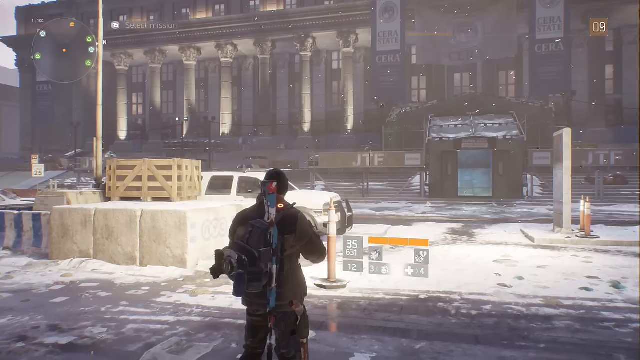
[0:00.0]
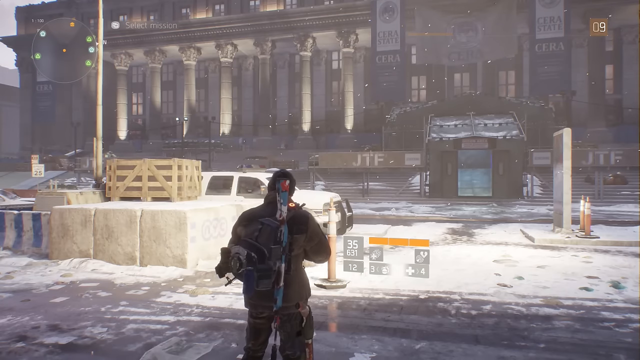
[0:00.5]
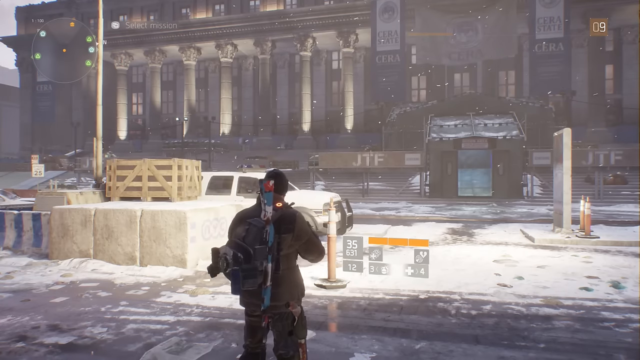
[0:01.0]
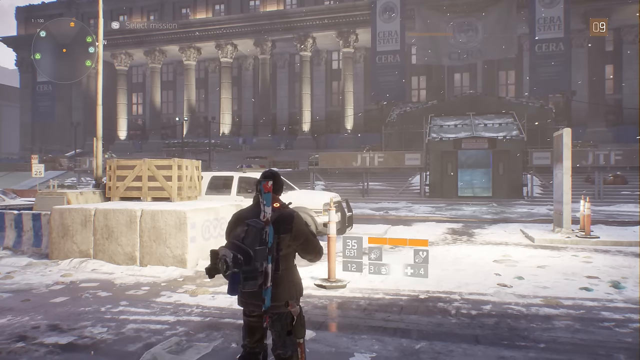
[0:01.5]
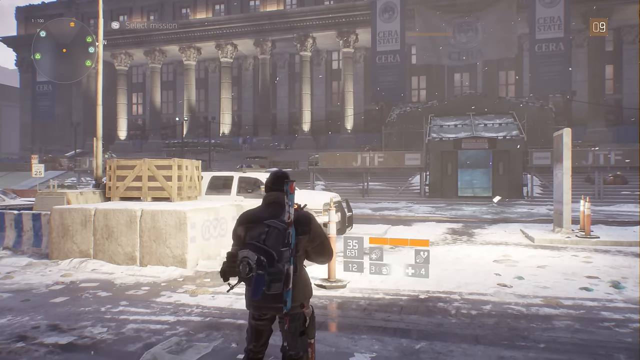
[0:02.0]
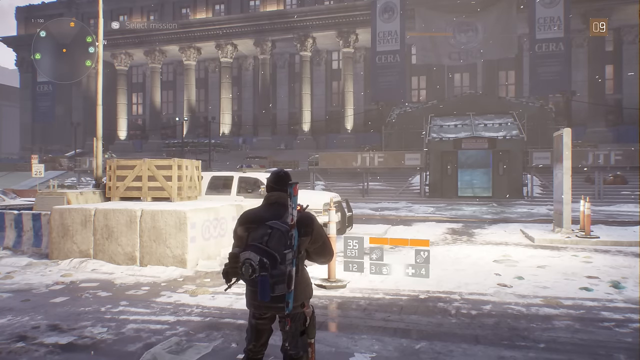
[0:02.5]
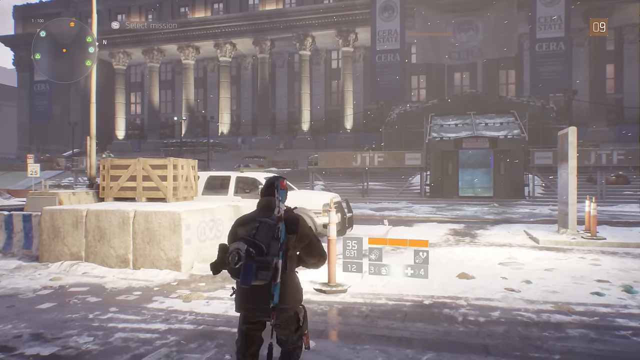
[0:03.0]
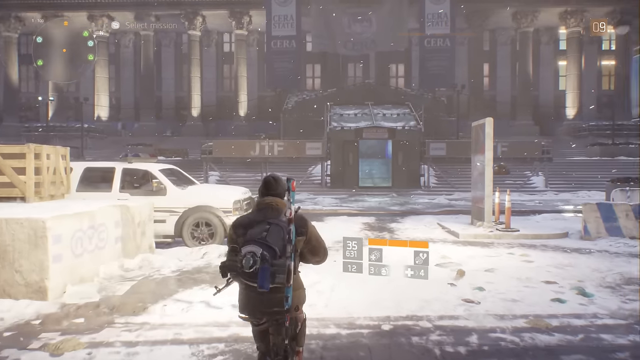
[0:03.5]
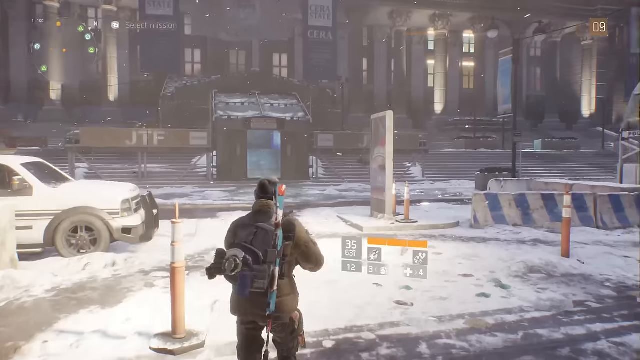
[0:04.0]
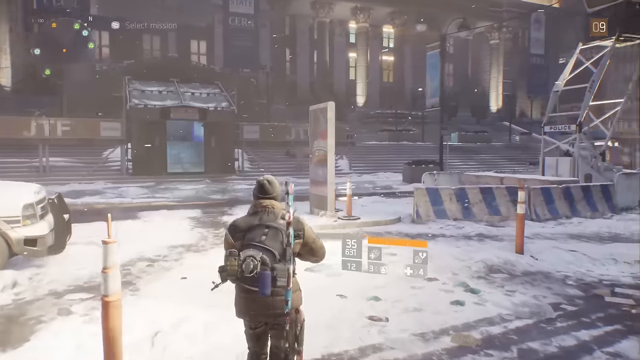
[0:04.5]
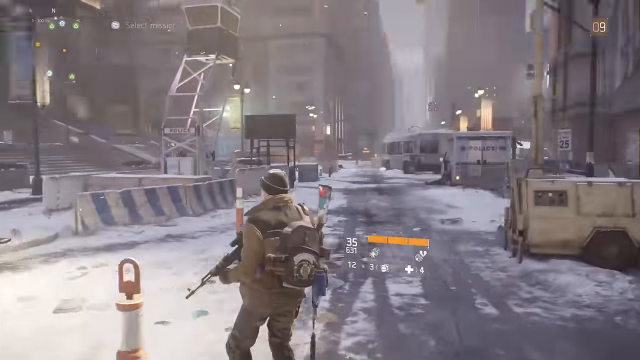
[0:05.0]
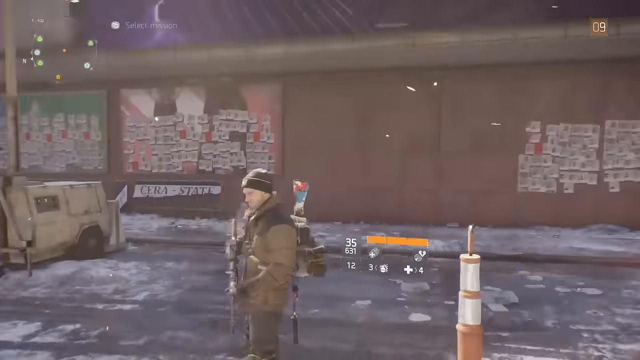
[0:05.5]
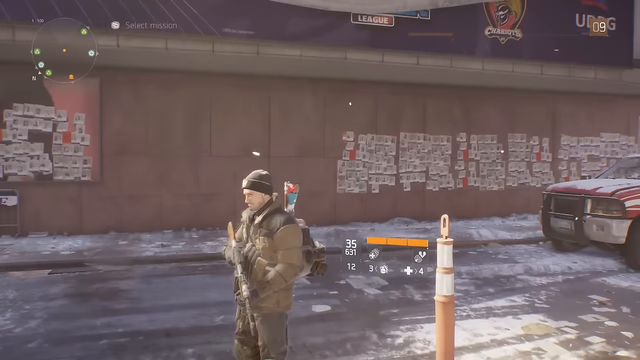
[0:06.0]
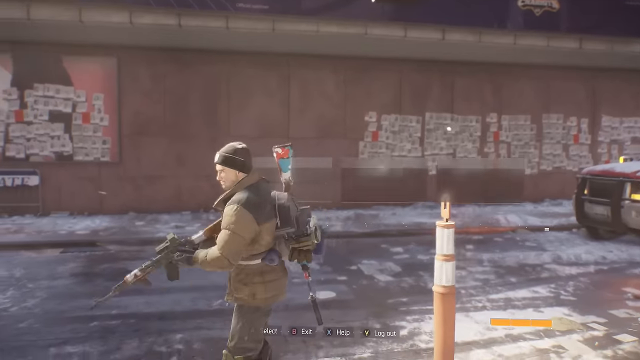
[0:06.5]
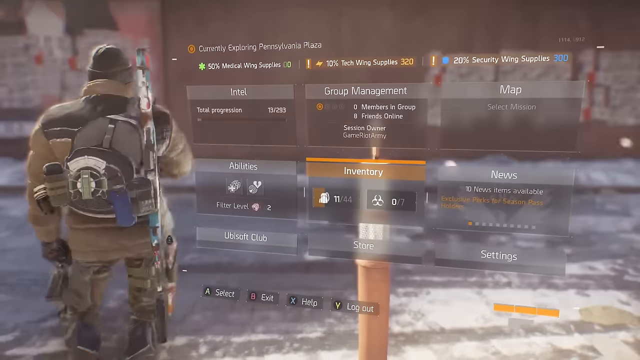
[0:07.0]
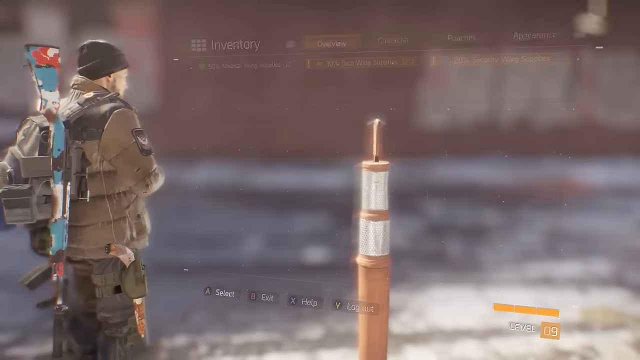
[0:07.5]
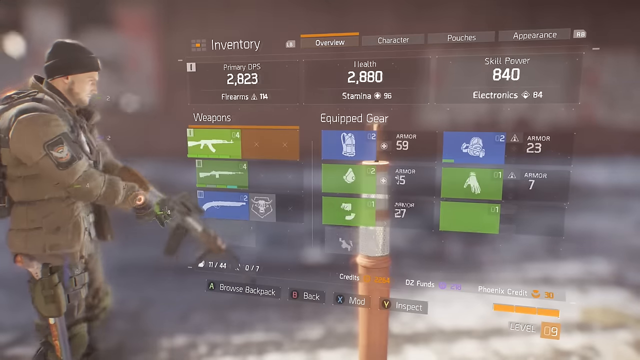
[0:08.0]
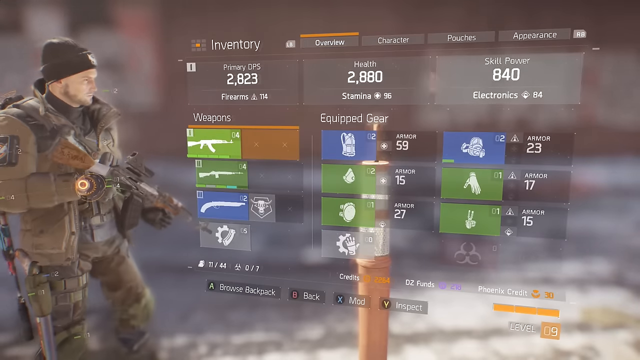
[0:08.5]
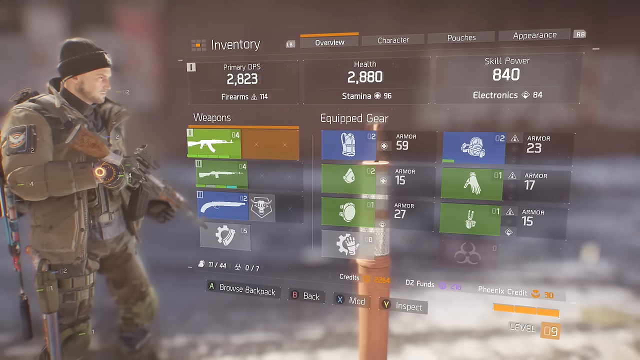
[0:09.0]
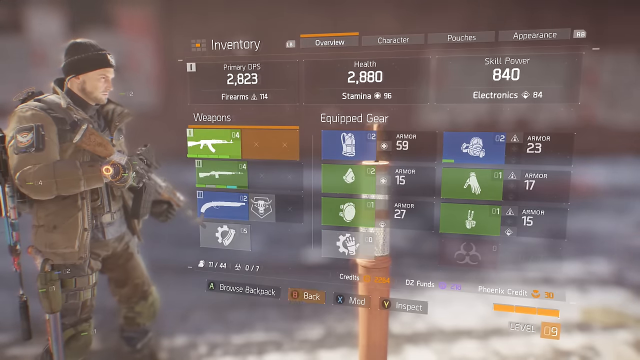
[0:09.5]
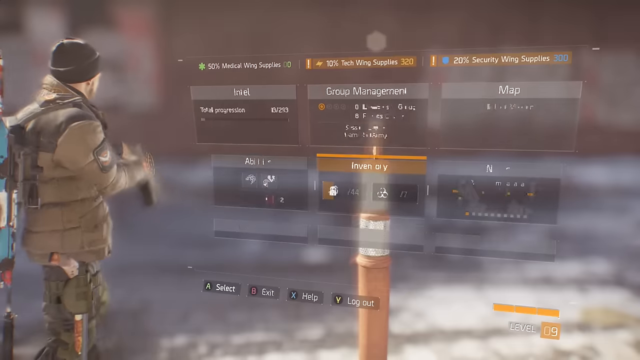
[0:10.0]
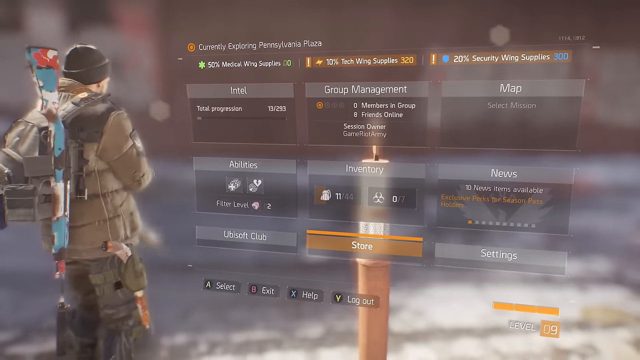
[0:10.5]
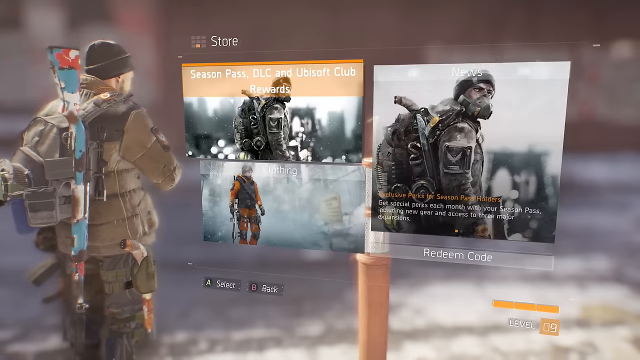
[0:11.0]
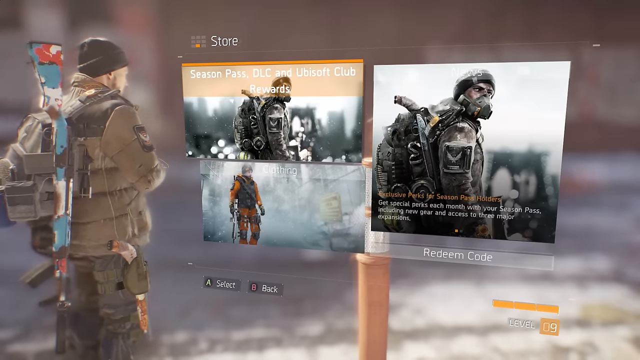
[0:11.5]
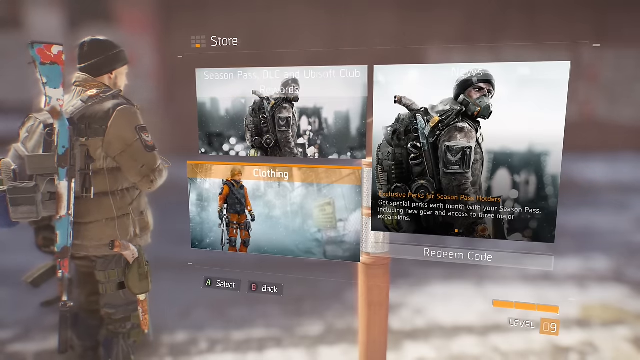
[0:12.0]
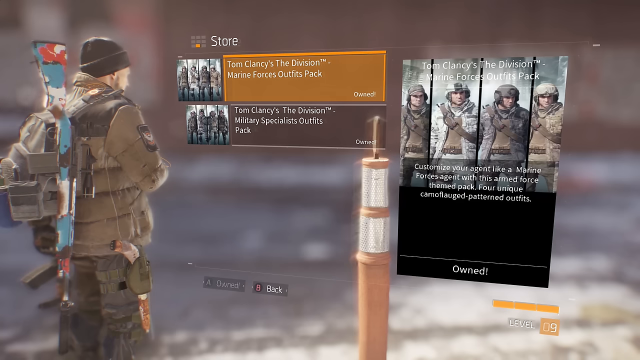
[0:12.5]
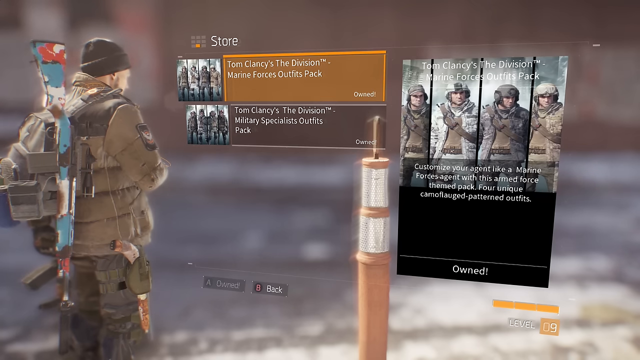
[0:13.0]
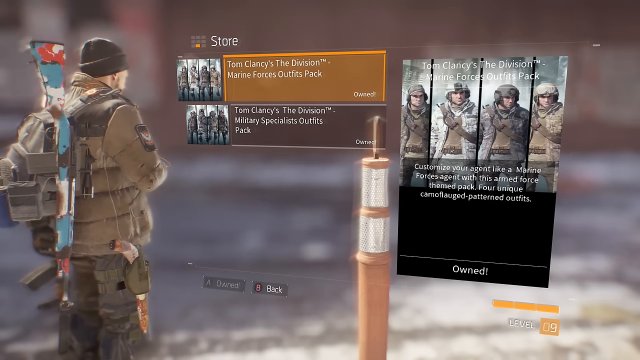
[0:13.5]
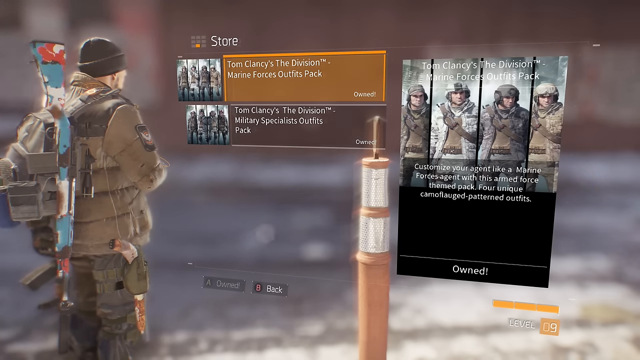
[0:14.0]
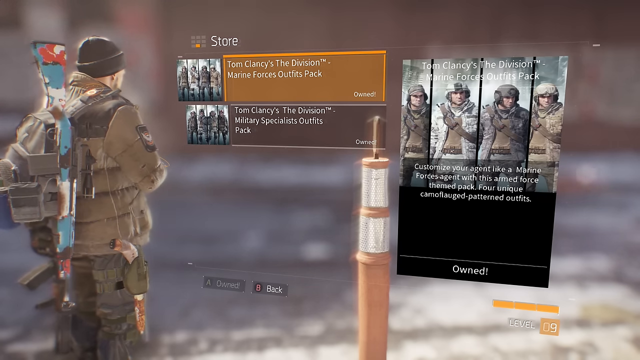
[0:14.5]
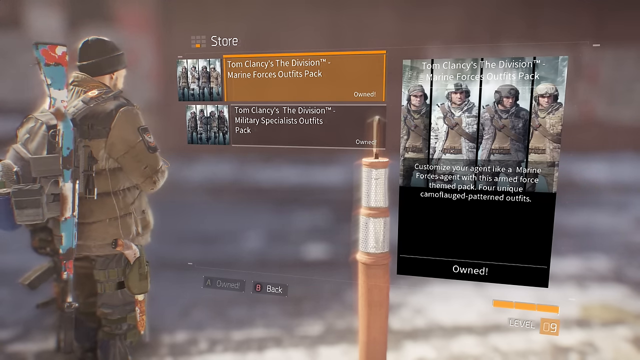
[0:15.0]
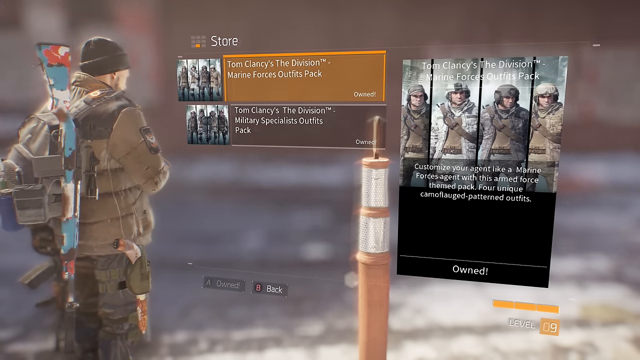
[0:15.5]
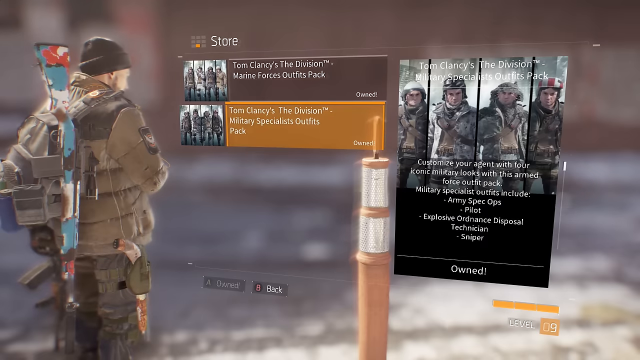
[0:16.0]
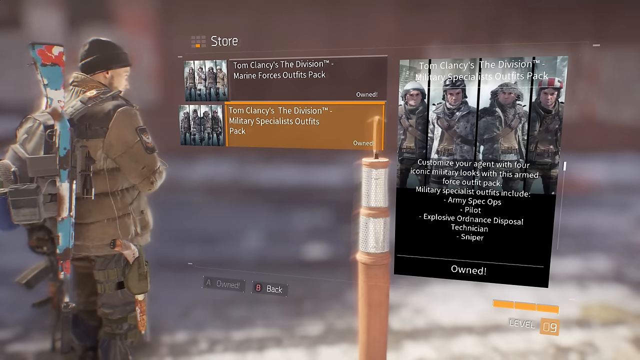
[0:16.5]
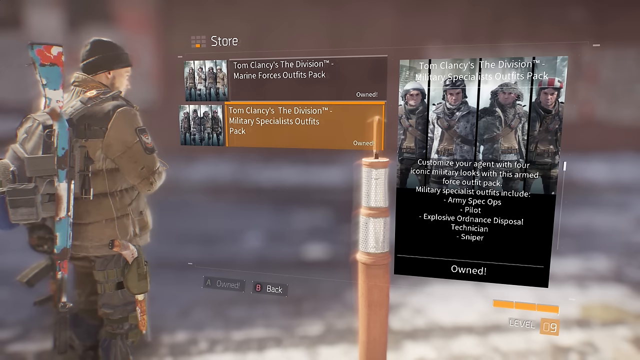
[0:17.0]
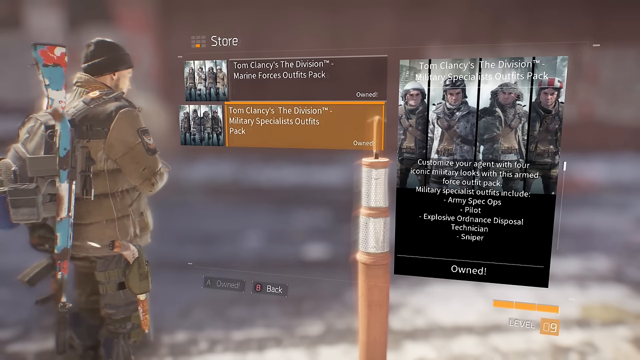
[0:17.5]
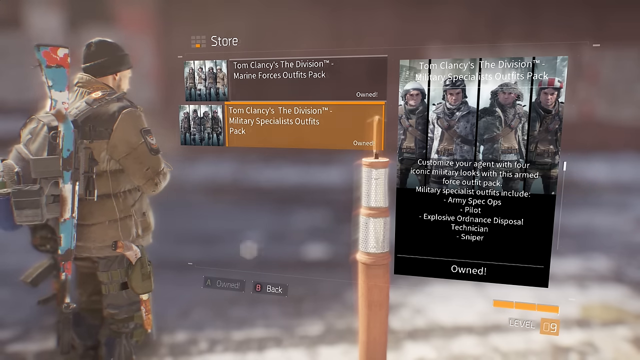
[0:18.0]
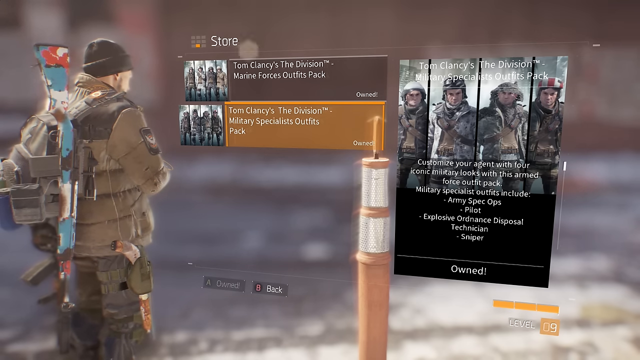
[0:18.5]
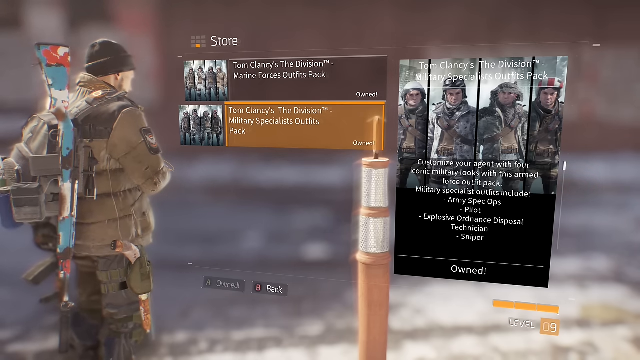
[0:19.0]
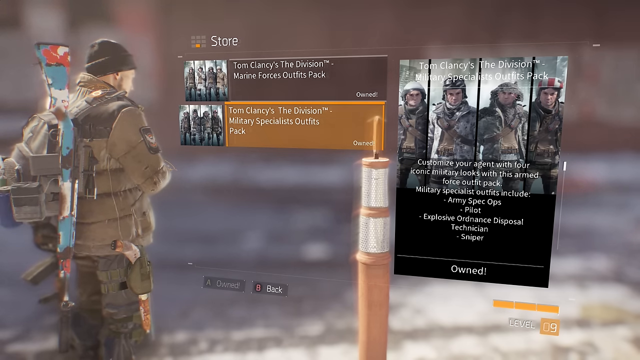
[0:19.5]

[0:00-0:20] In the upper left corner is a red circle with the white text "Game Riot." A character is in the center of what appears to be a city area, with a building with tall white pillars similar to a big court building. Directly in front is a white truck. The person in front of the camera sways back and forth a little; they wear a military camouflage suit and have a gun strapped to their back along with a knapsack. A sign with some numbers on it is directly in front of them. They charge forward a bit, and the little sign, which is attached to the character and moves with them, is on the right-hand side; it has grey squares and a yellow stripe across the top that could be their energy level. The character walks forward and the view pans around. A menu follows: at the top it says "Primary Ops 2823," below that "Firearms," and below that "Weapons" with pictures of several weapons. Then come "Health 2880," "Stamina," and under that "Equipped Gear," with pictures of several things such as a knapsack and a mask. The next column has "Electronics," with several items under it as well. The character is on the left-hand side, holding an AR-type gun and wearing a black beanie and a military outfit. They turn so more of their back and knapsack is visible, and to the right of them is a collage of three different images; one says "Clothing," and below the one on the right it says "Redeem Code." Another part of the menu follows, with two frames on the left: the top one says "Tom Clancy's The Division Marine Forces Outfits Pack," and underneath it says "Tom Clancy's The Division Military Specialist Outfits Pack." To the right are four different characters, and below them it says "Customize Your Agent like a Marine Forces Agent with this Armed Force themed pack, four unique camouflaged patterned outfits." At the bottom it says "Owned!"